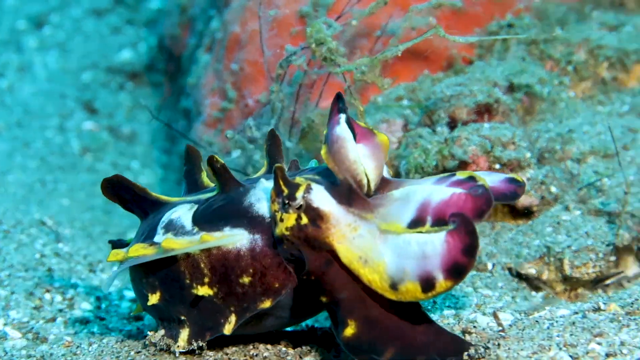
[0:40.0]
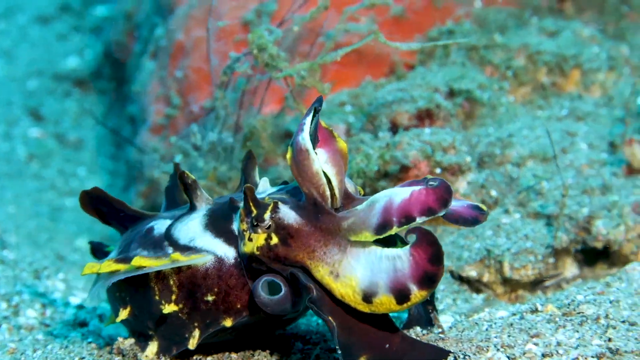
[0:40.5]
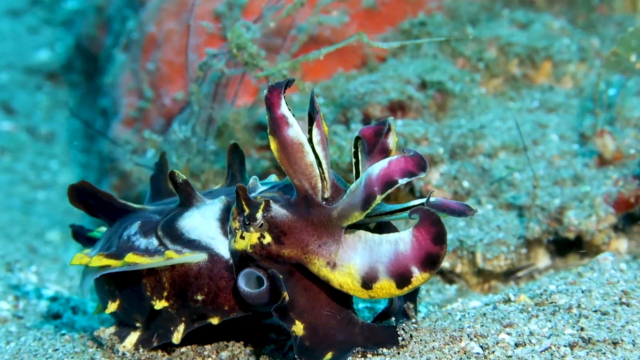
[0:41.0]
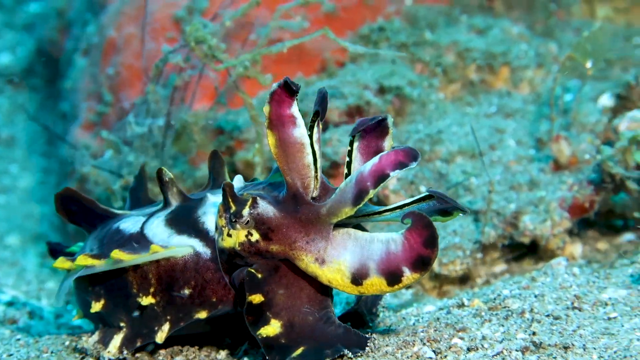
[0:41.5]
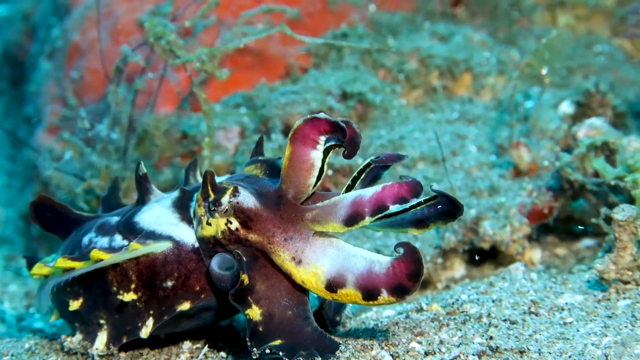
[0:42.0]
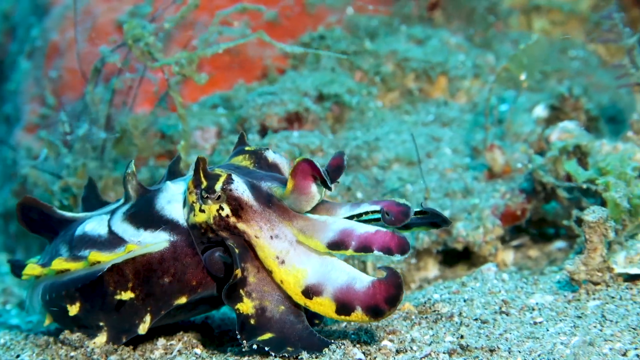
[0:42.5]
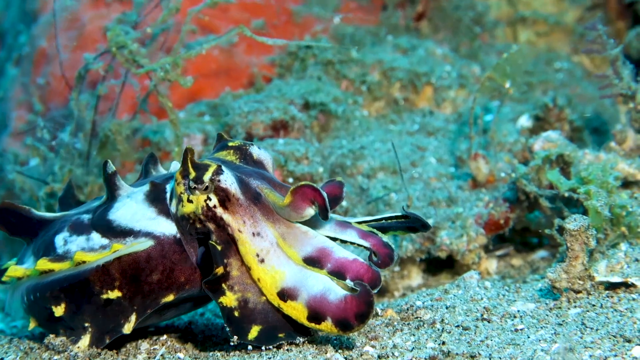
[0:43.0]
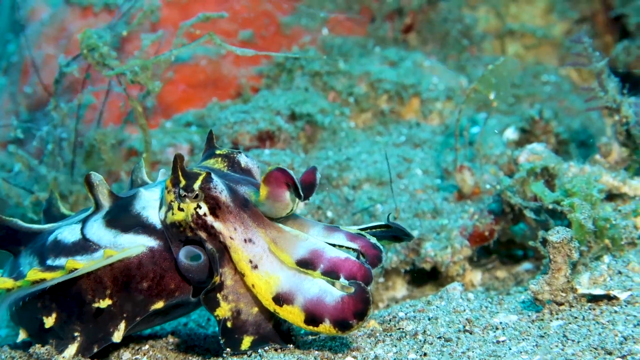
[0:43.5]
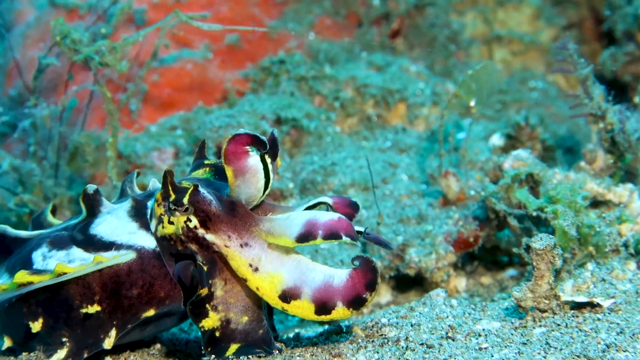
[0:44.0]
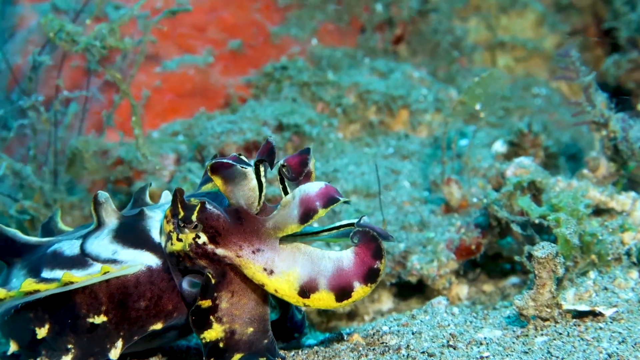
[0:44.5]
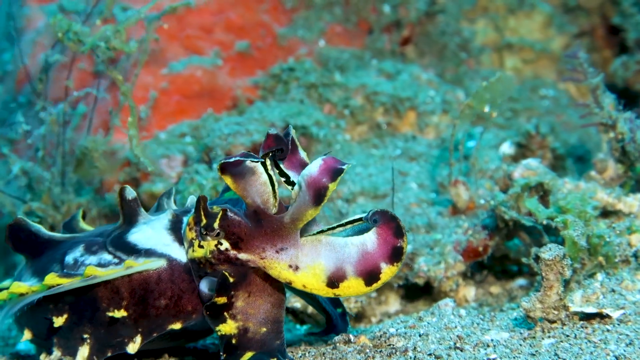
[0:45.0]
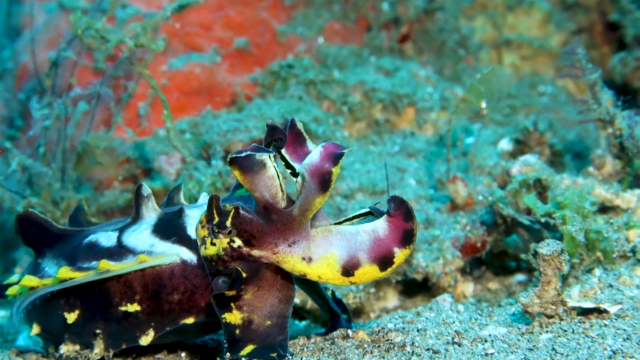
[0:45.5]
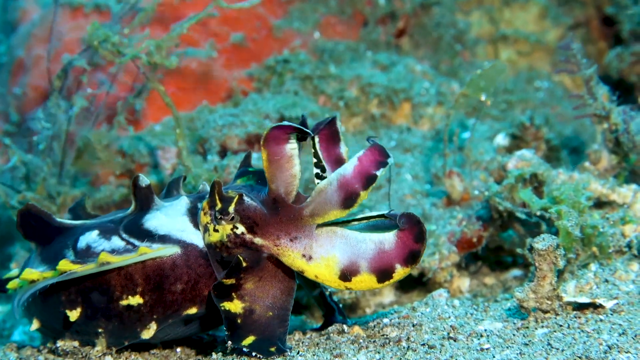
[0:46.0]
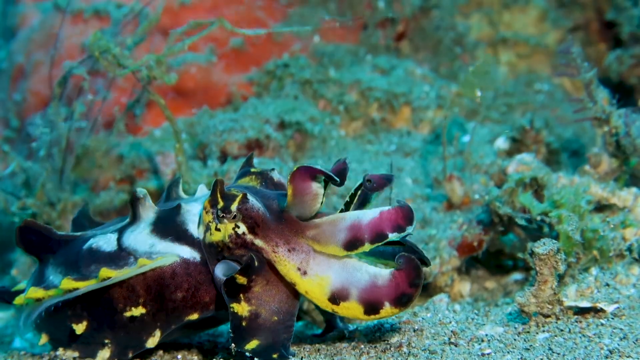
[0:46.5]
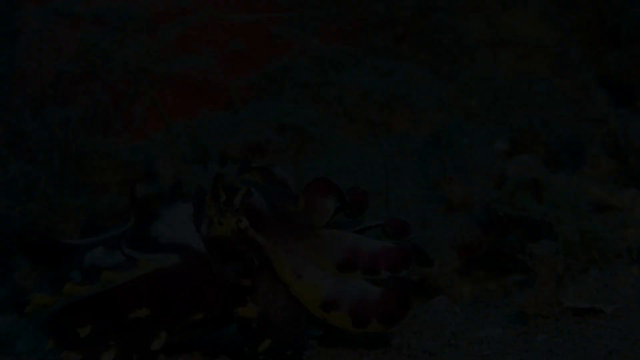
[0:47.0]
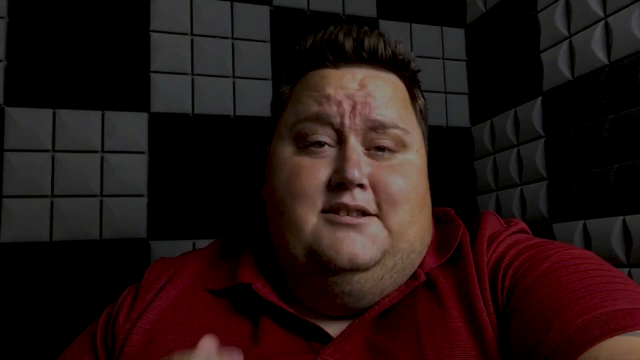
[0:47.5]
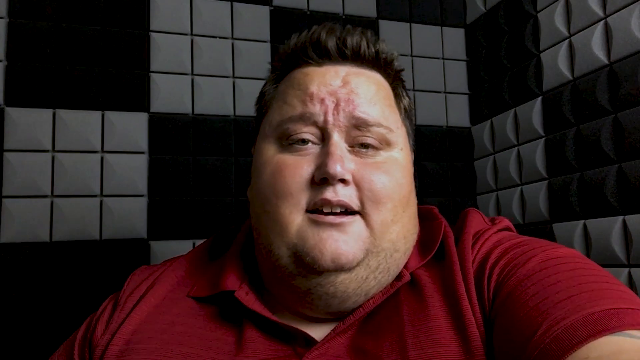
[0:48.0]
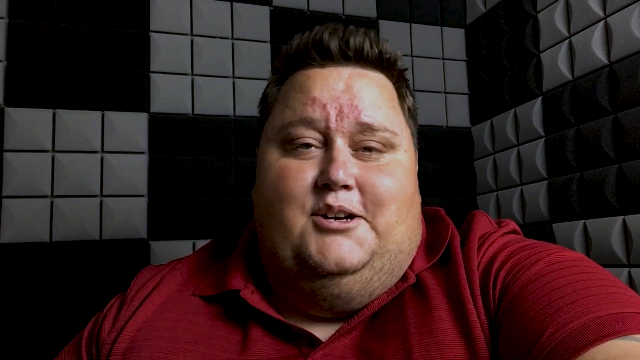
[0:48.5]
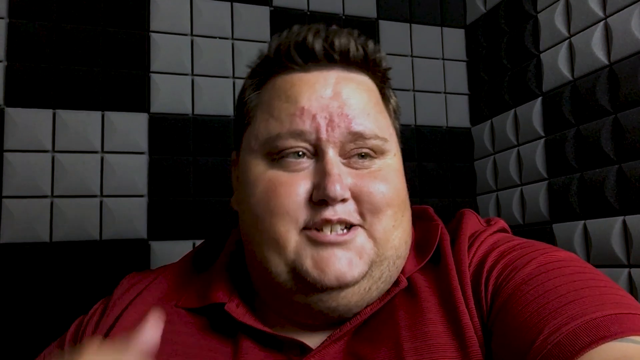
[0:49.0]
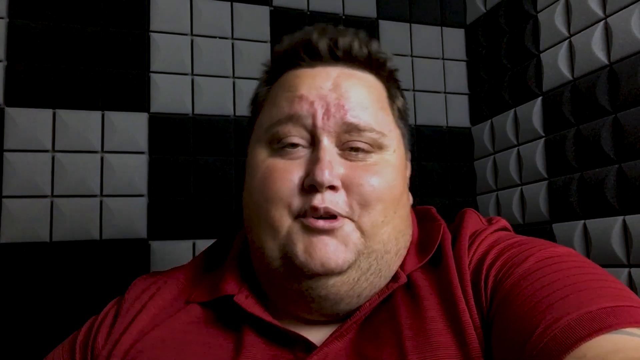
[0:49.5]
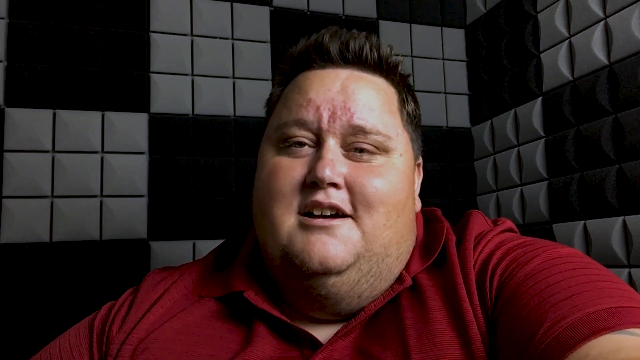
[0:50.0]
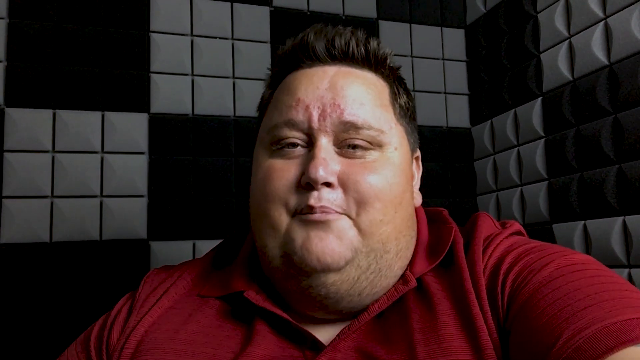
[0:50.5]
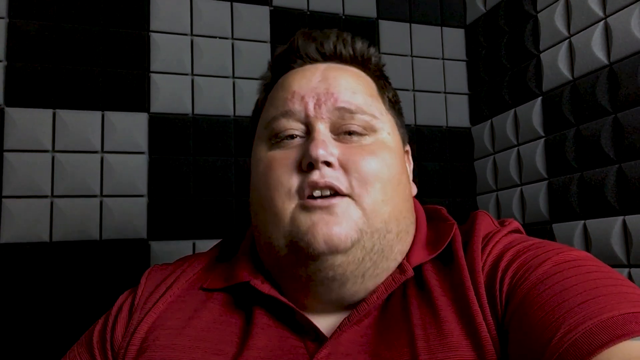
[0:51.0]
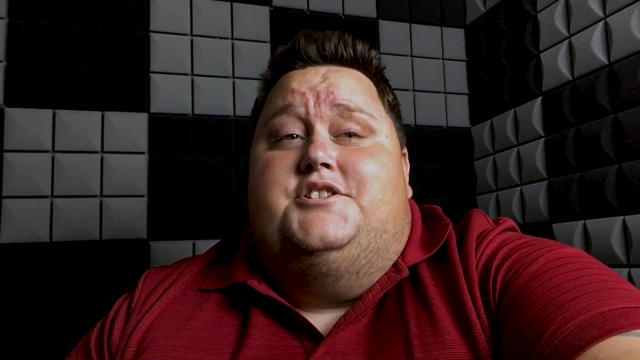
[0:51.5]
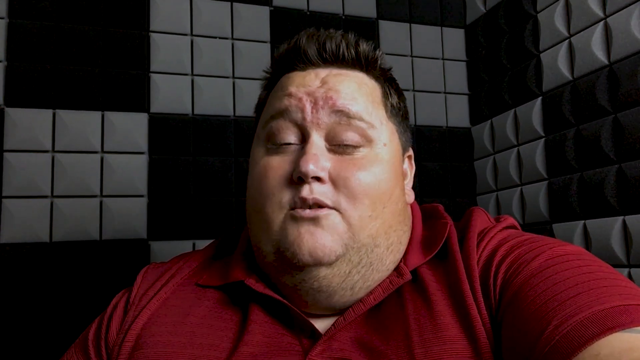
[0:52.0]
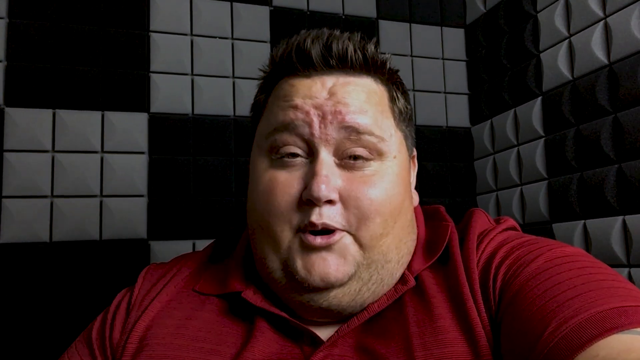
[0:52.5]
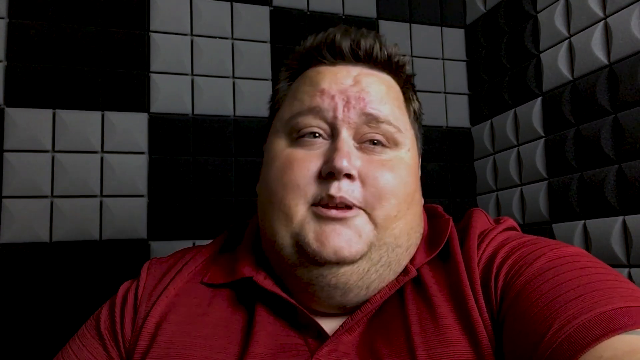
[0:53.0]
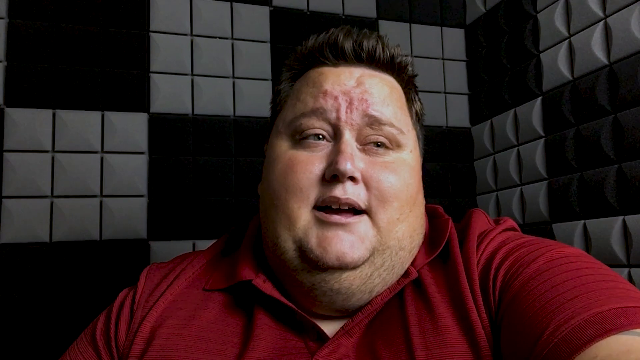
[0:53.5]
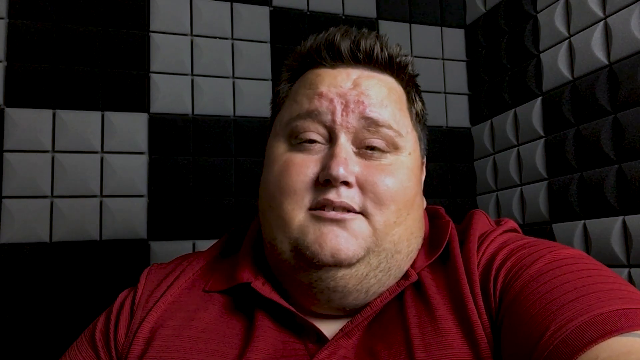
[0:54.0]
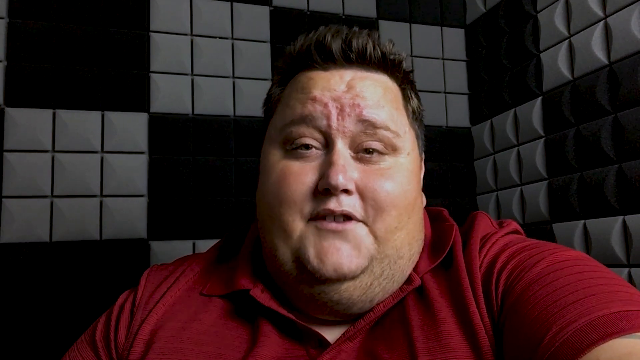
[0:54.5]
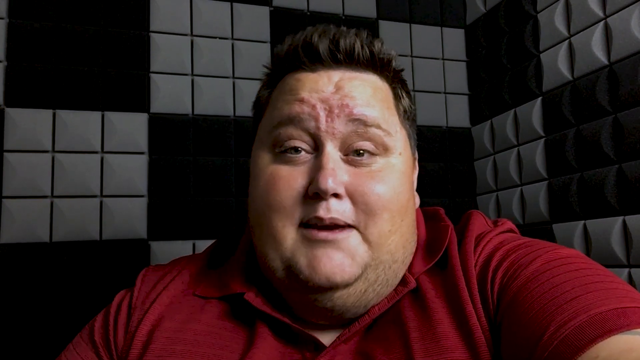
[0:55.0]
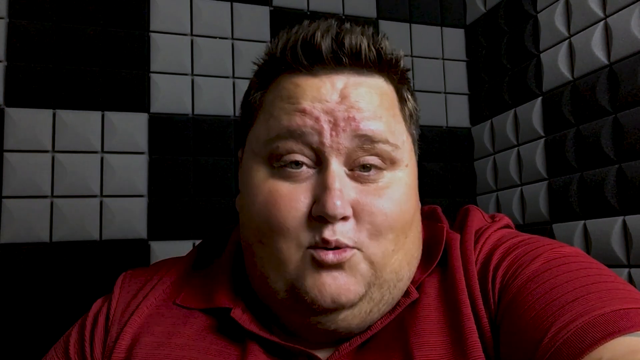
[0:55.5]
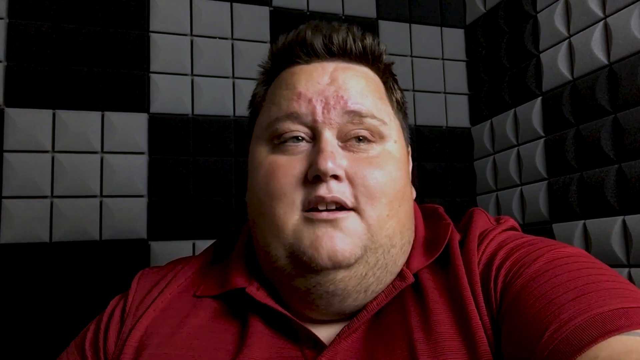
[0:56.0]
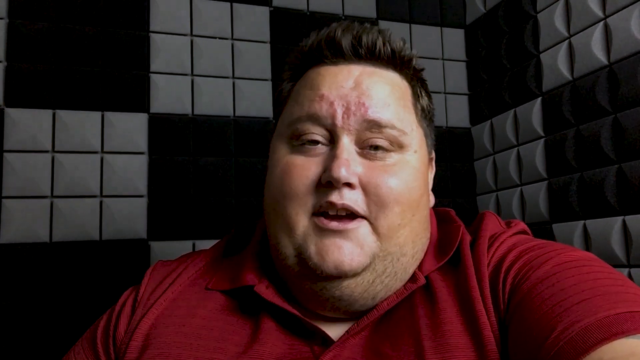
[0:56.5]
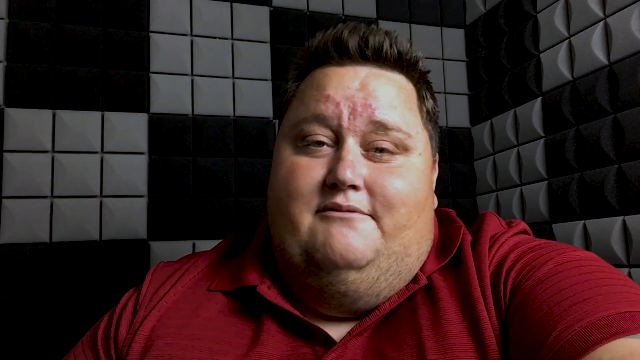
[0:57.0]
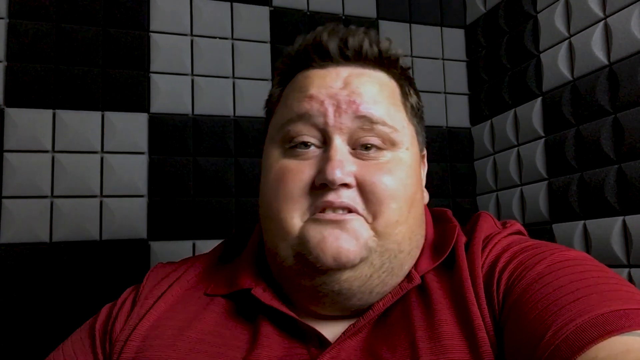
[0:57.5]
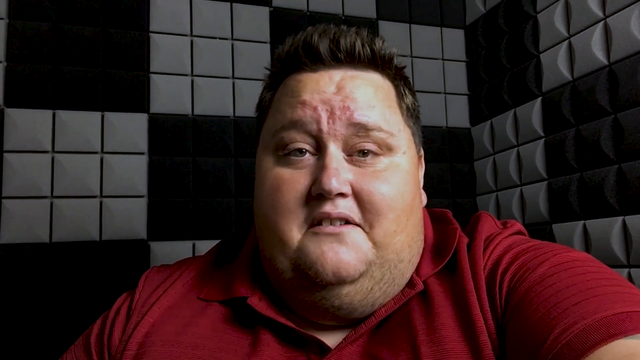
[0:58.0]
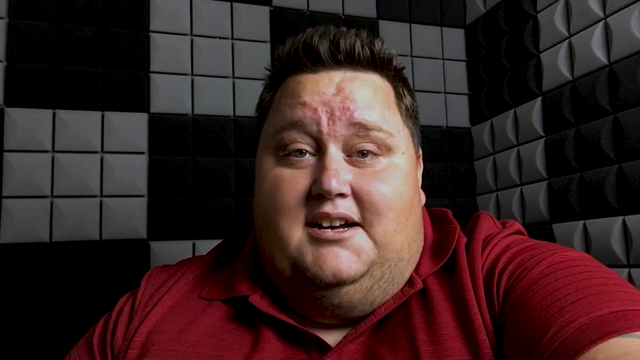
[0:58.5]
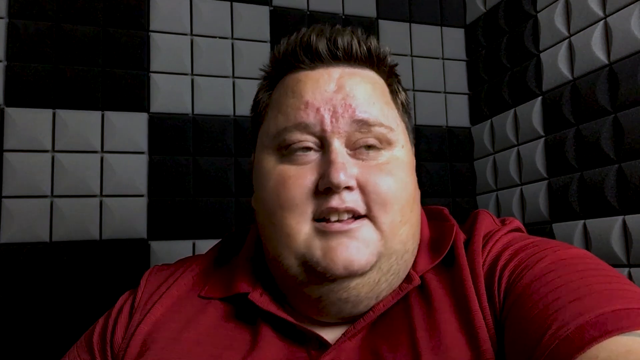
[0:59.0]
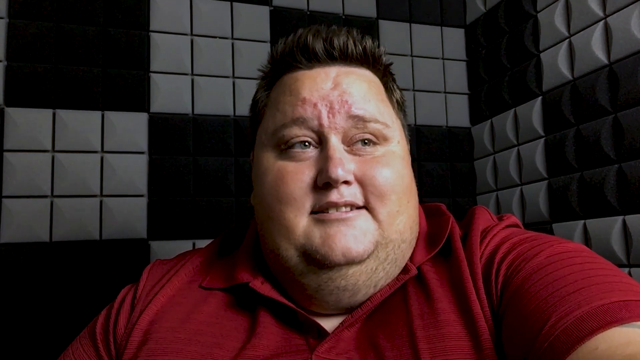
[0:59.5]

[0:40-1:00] The strange-looking animal is shown again in various colors, predominantly yellow, with white and navy blue, and a touch of purple around its front in what look like small tentacles. It also has what look like spikes on its body. It navigates under the ocean, moving forward very slowly. On the side of the animal are what look like eyes, flashing as they disappear, reappear and grow larger. The video transitions back to the obese man sitting in a room with black and gray tiles behind him. He is still gesticulating, wearing a red t-shirt, with his teeth showing as he moves his lips. He also moves his head, and his forehead looks like it has acne, reddish in the middle.